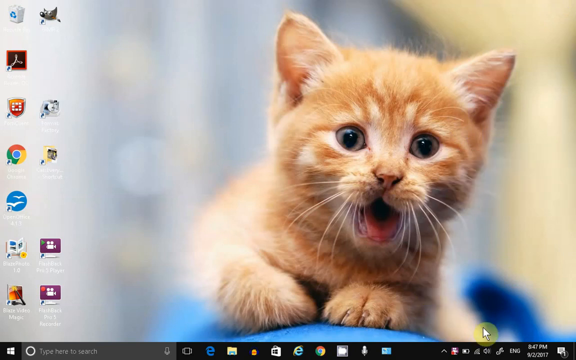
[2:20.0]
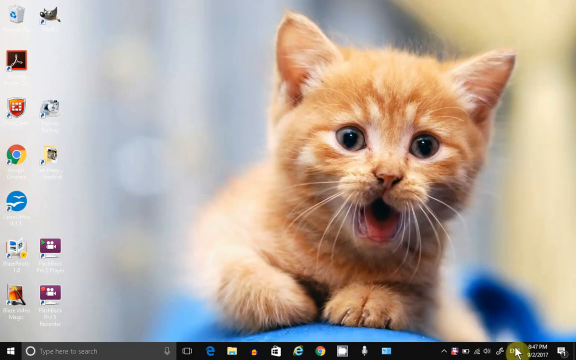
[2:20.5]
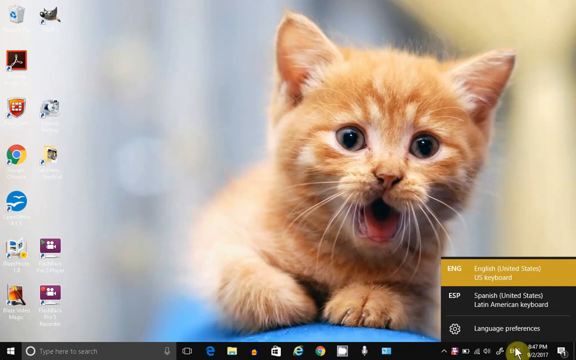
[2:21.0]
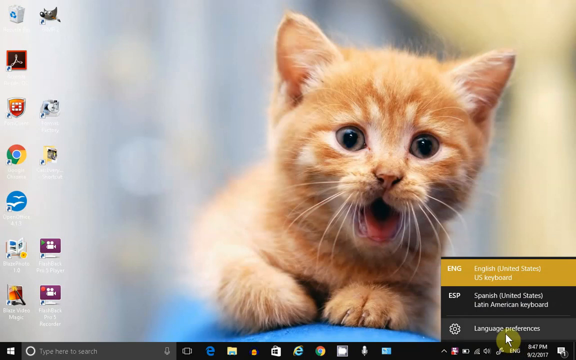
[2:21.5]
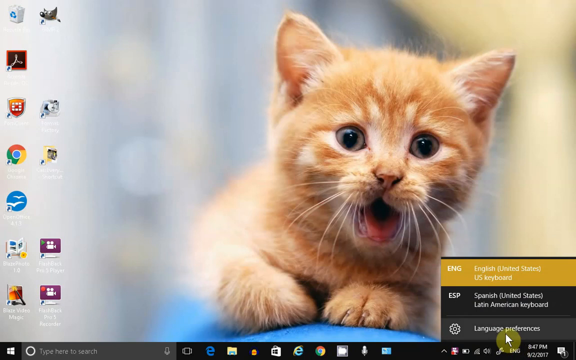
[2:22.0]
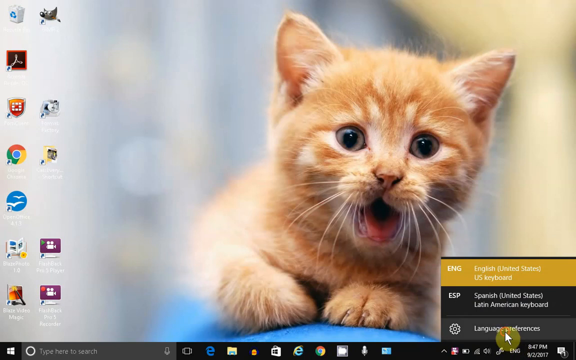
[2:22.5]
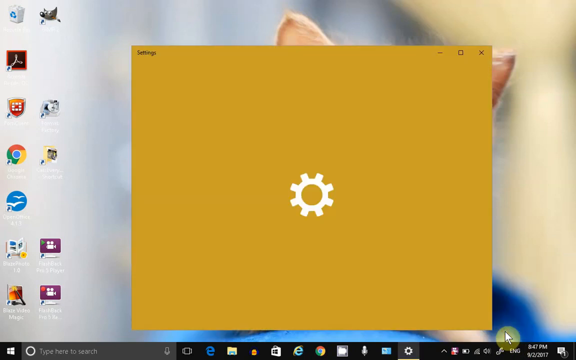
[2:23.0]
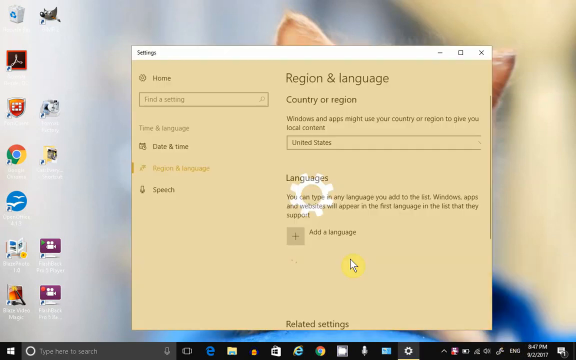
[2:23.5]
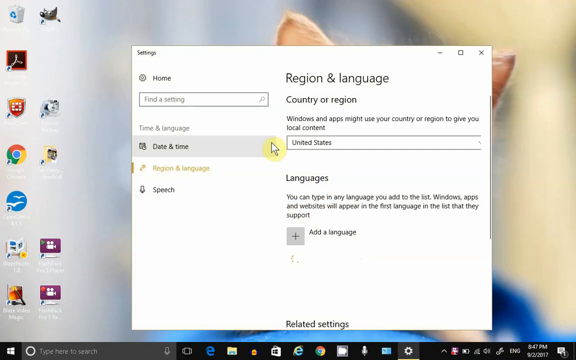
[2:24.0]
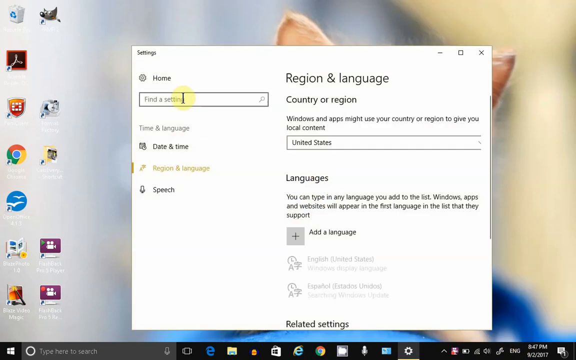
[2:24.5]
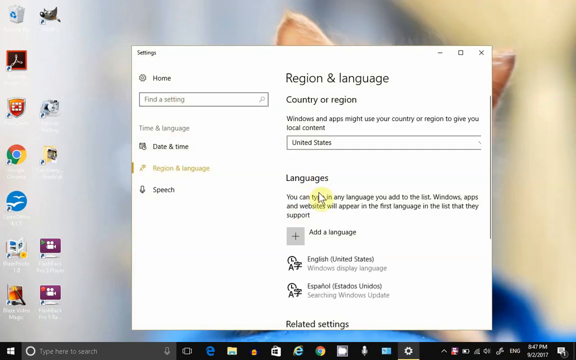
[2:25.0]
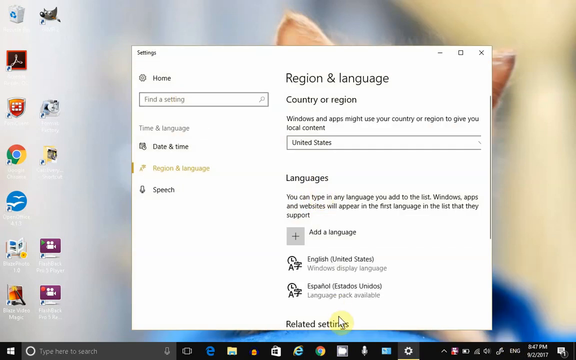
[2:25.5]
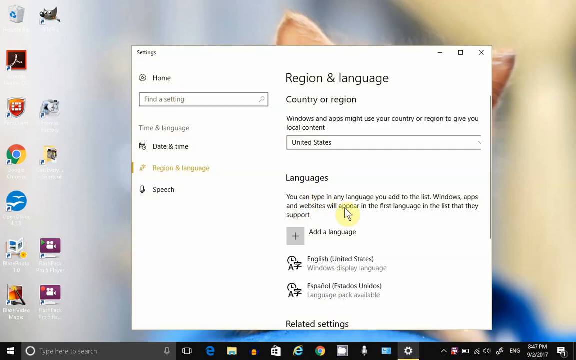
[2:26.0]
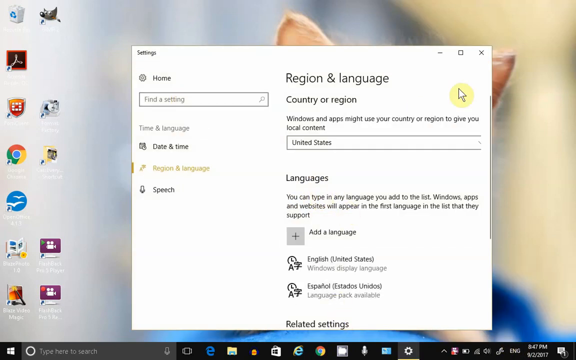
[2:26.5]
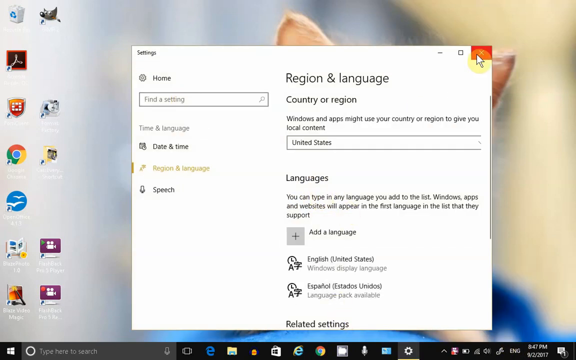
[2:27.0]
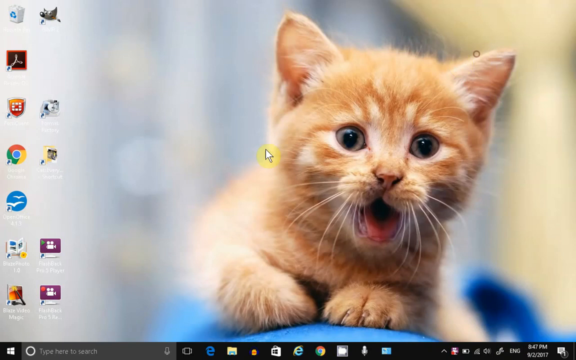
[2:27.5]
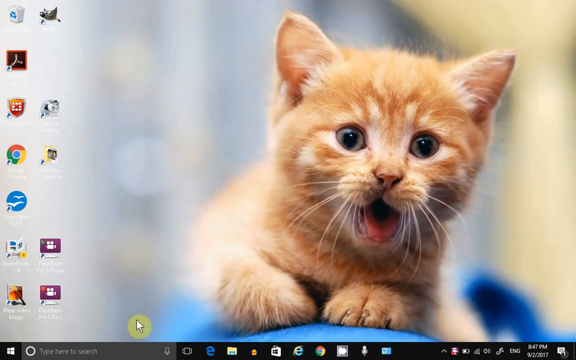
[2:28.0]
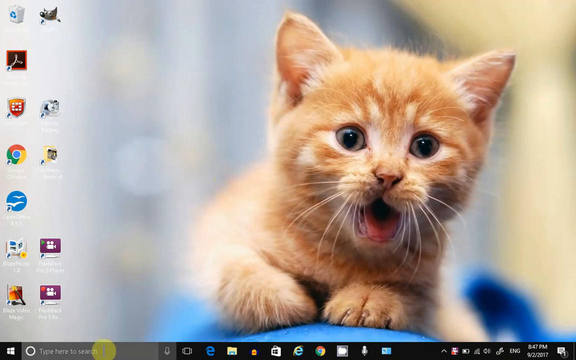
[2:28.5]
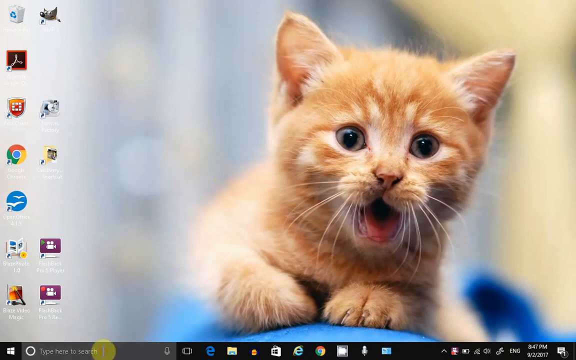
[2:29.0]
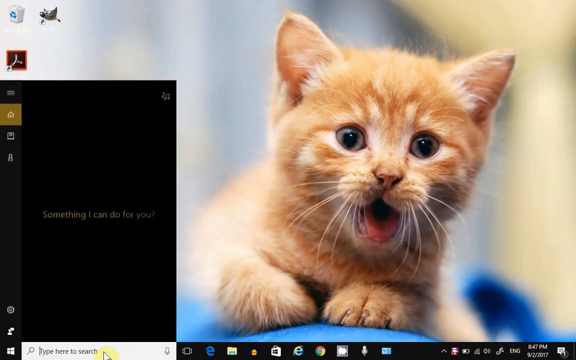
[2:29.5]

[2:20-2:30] A screensaver shows a red tabby cat with an M on its head. Its mouth is open, it is leaning on something, and its two front paws are visible. A cursor surrounded by yellow goes randomly all over the screen, creating pop-ups: a white pop-up in the middle, a darker pop-up on the side, and one regarding English and Spanish in the lower right-hand corner. A pop-up says "region and country" and is part of the settings. The cursor goes to the upper right-hand corner of the pop-up and clicks the orange, and the screensaver appears again. A pop-up in a black box says "hello", possibly a message from somebody, with a dark-colored circle with brown around the outside.